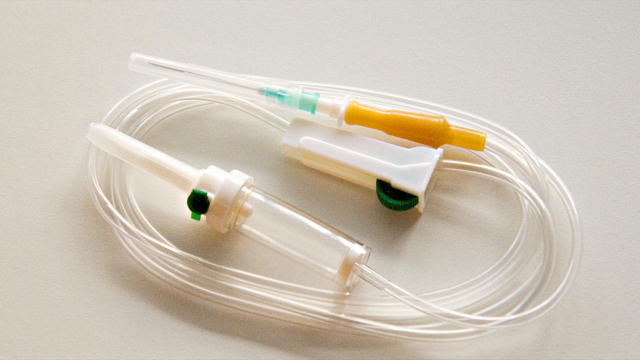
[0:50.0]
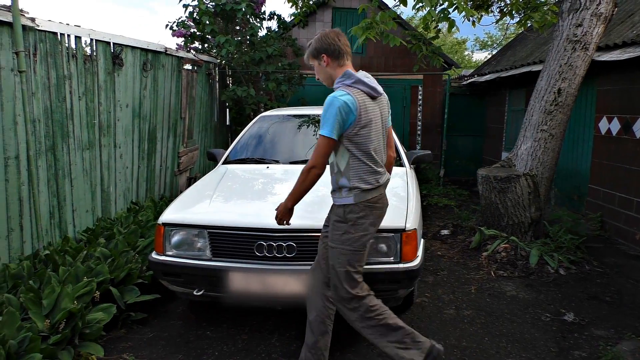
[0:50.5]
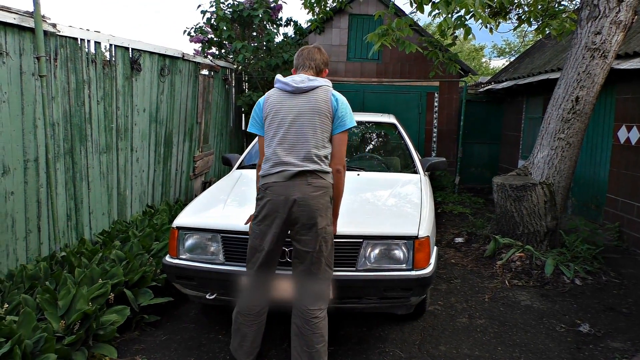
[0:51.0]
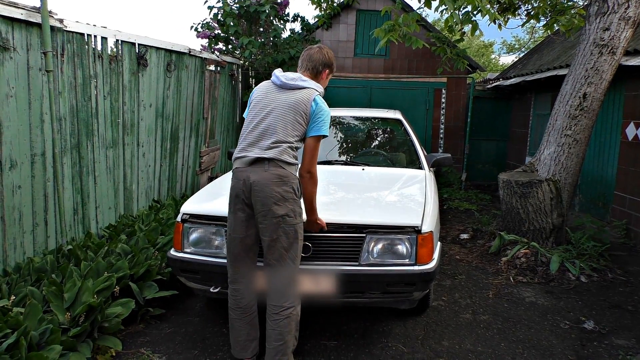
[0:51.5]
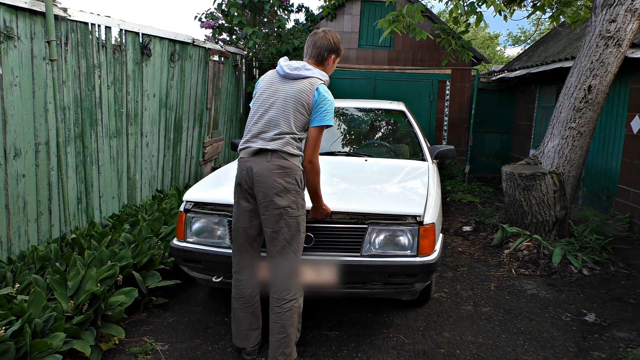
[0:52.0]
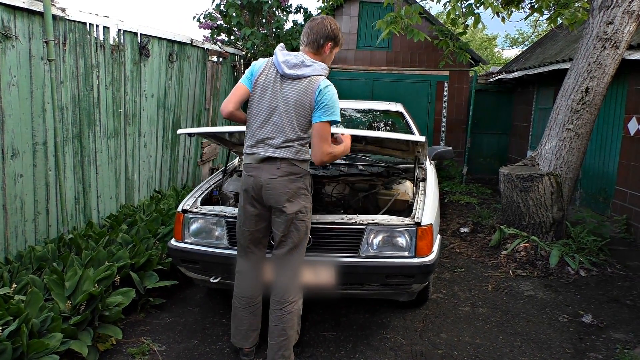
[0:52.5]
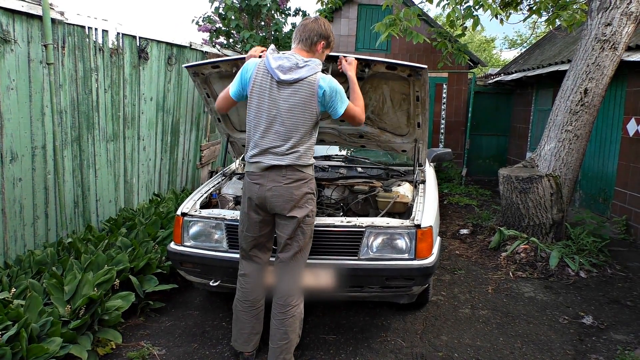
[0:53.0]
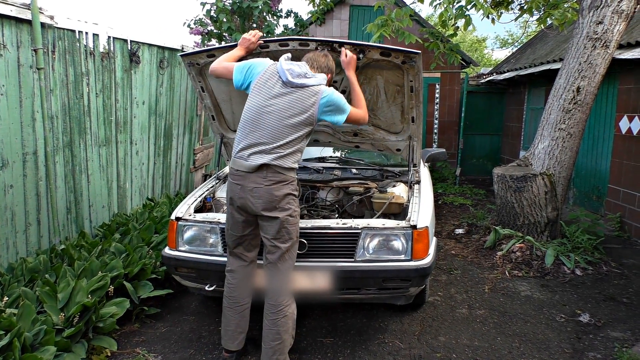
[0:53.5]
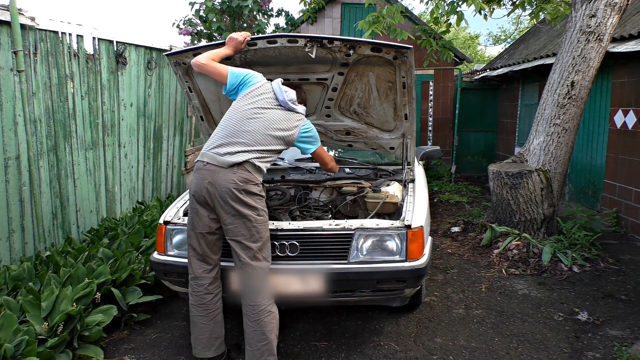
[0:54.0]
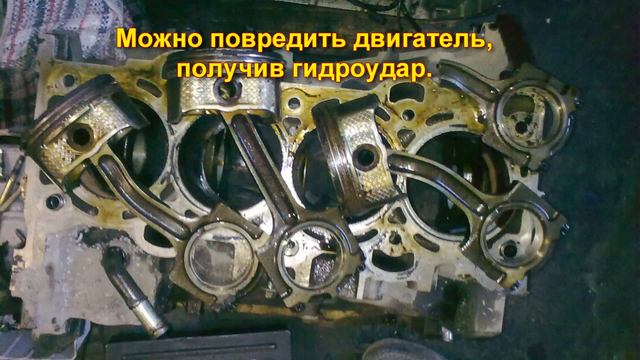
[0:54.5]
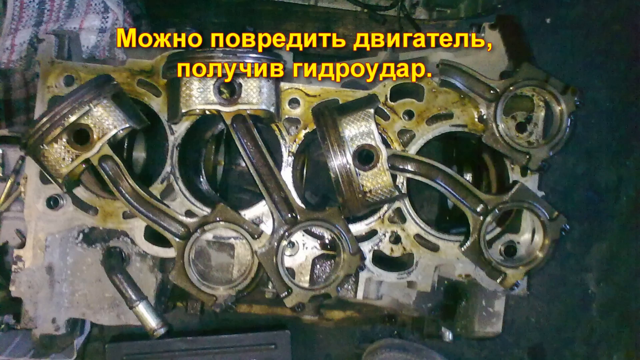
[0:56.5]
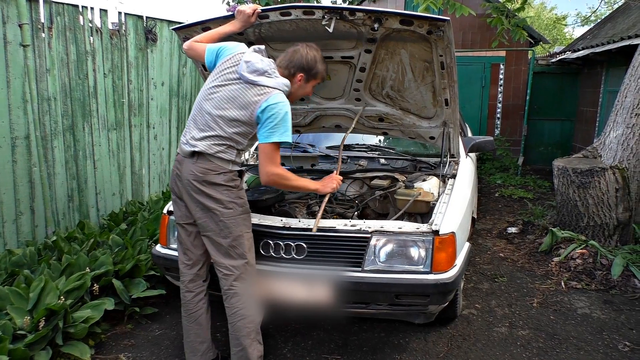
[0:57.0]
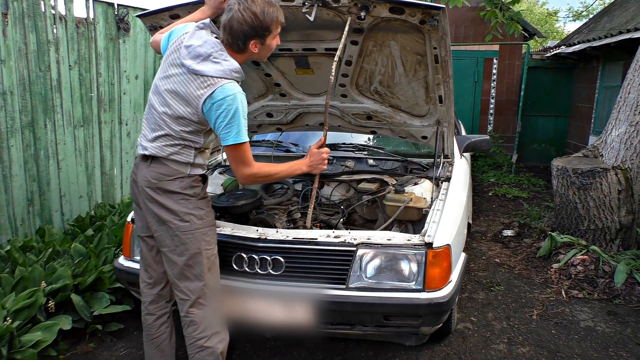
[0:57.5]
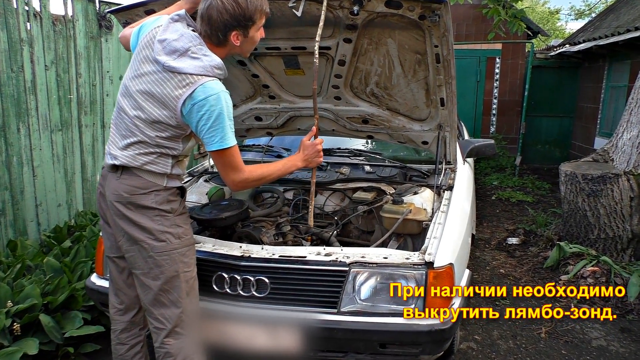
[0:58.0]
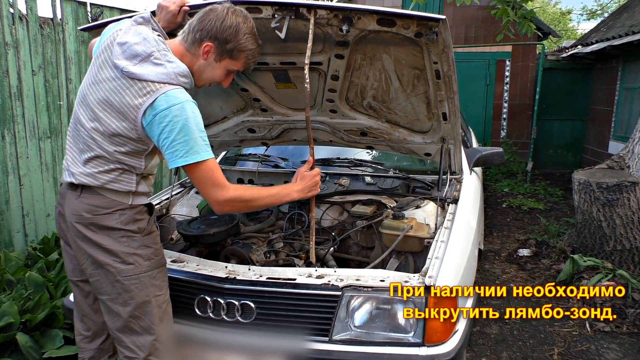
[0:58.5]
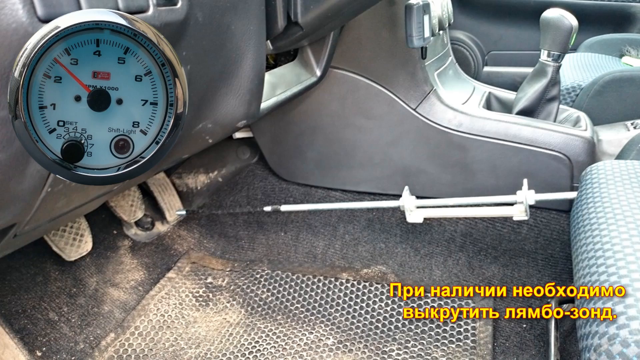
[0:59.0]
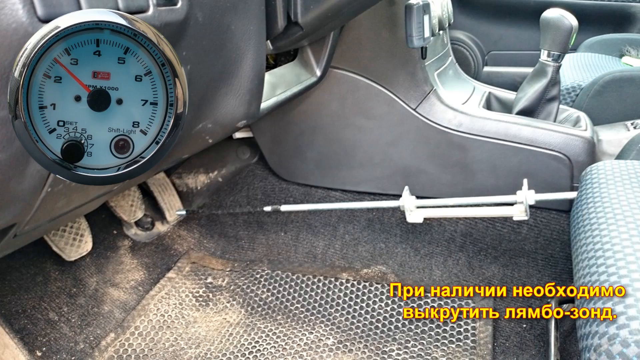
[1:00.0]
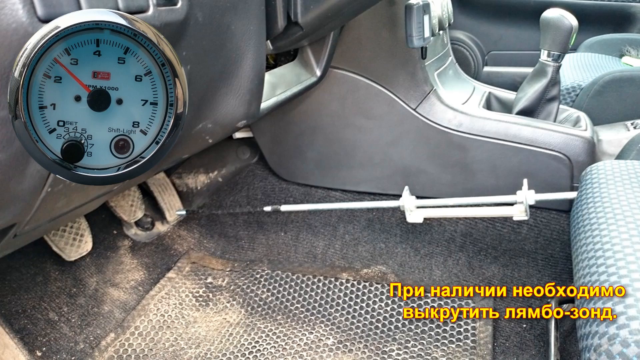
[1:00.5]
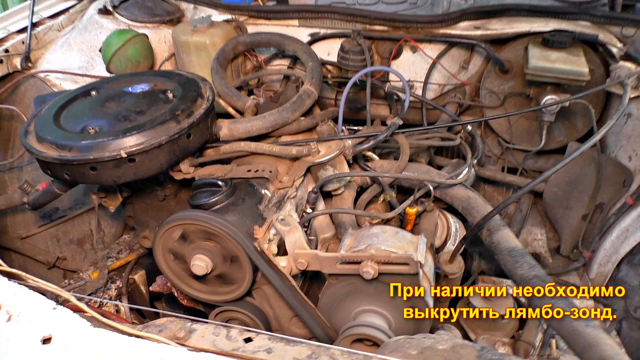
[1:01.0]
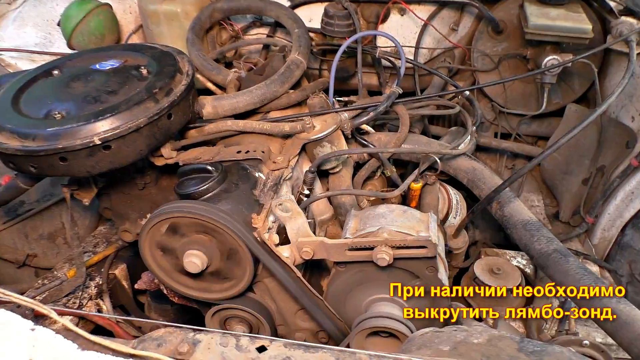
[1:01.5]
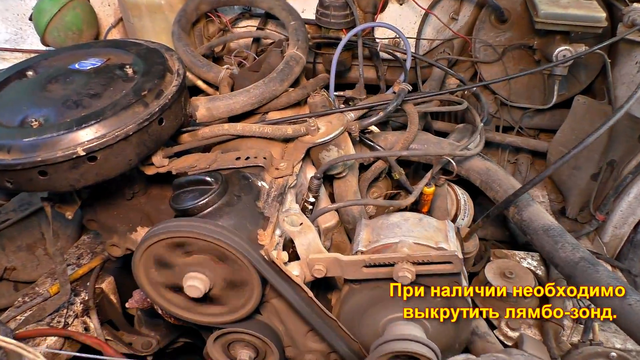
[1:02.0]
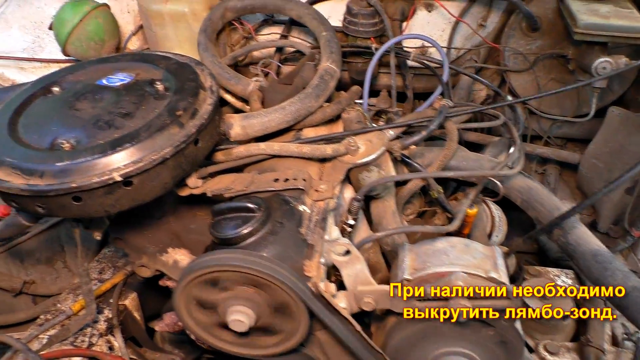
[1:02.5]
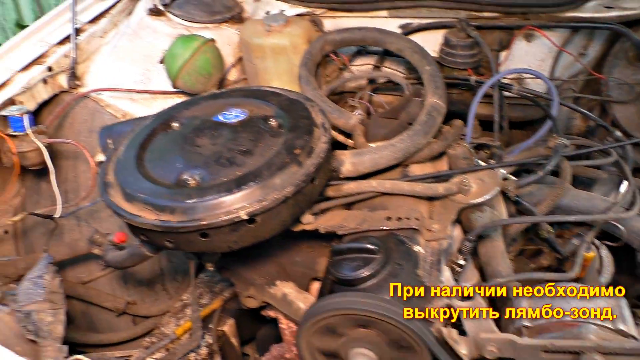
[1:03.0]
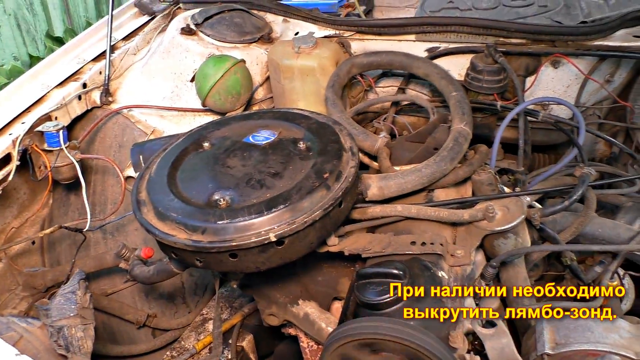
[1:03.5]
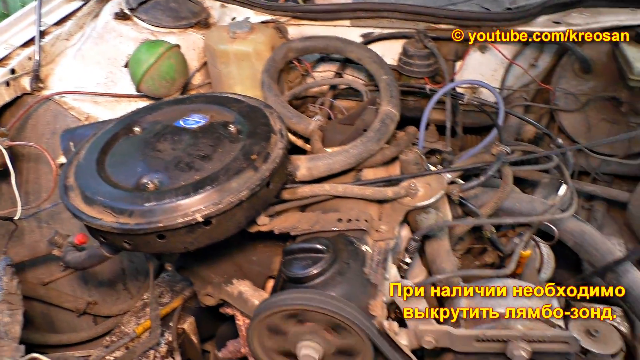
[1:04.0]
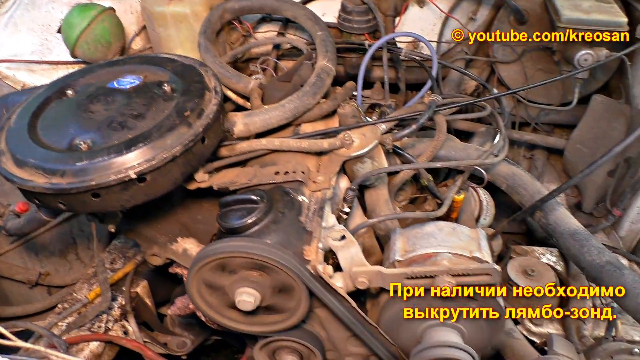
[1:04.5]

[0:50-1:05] The man, now in khaki pants and a blue shirt, works on car repair. He says "we'll need a bottle and a tube with a drip bag," shown in closed captions running along the bottom of the screen. The hood of the white car is open, and the inside of the engine is shown for a moment. Captions read "let us set it to 2500 rotations with the help of this device." A long white stick-like item has one end pressed into the driver's seat and the other end holding down the gas pedal, apparently to keep the engine running. The engine is shown running with the hood propped open, and the belt and the inside of the engine are visible as he prepares to do the maintenance.